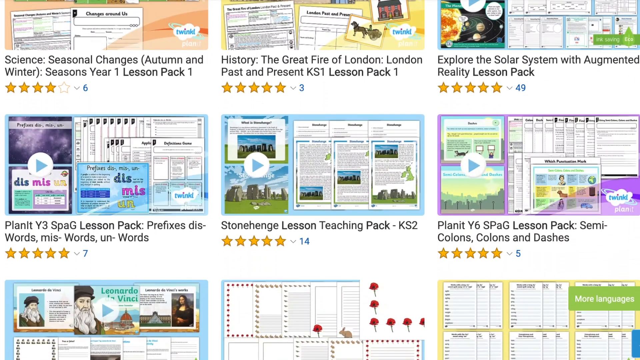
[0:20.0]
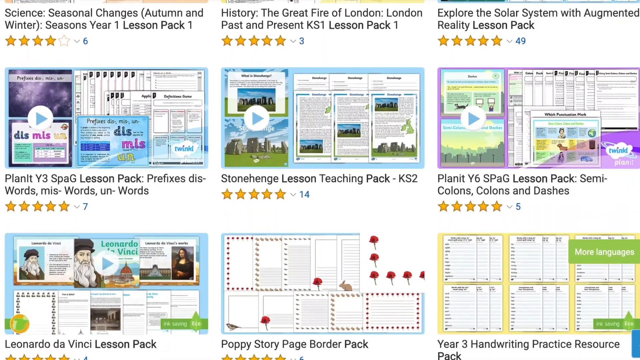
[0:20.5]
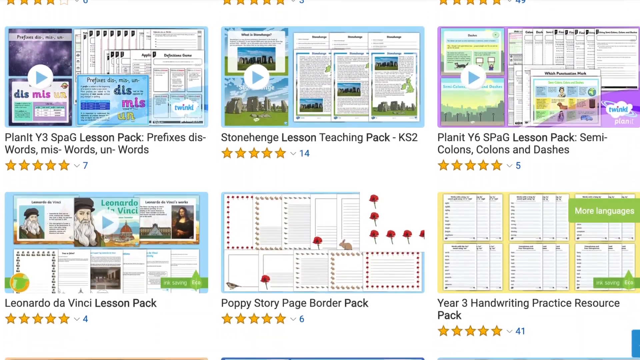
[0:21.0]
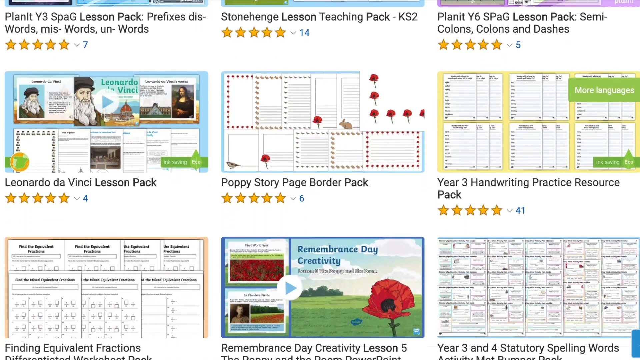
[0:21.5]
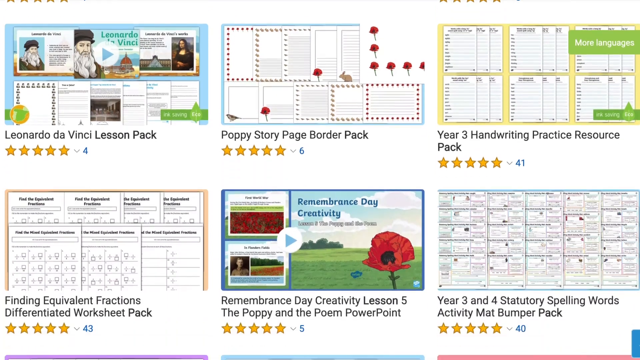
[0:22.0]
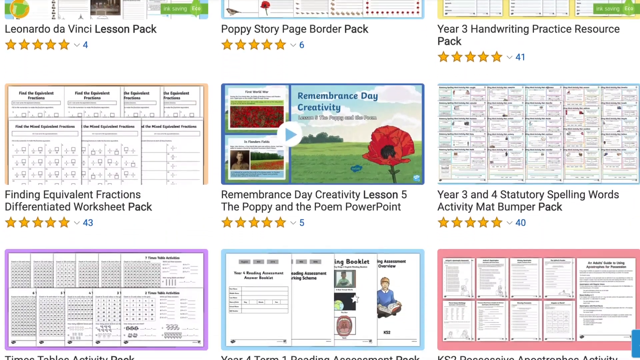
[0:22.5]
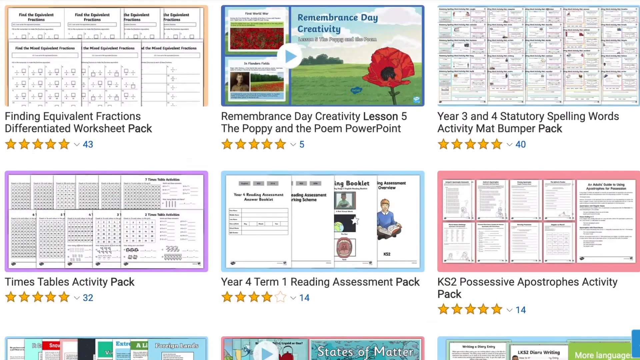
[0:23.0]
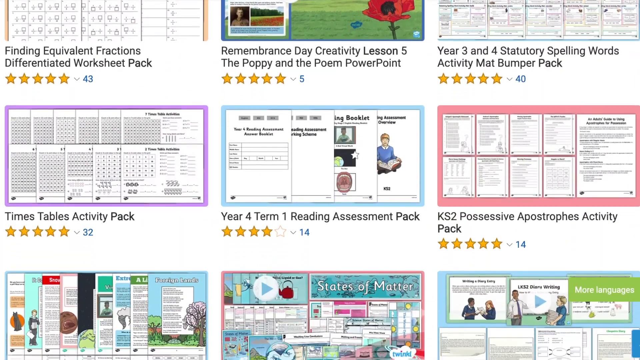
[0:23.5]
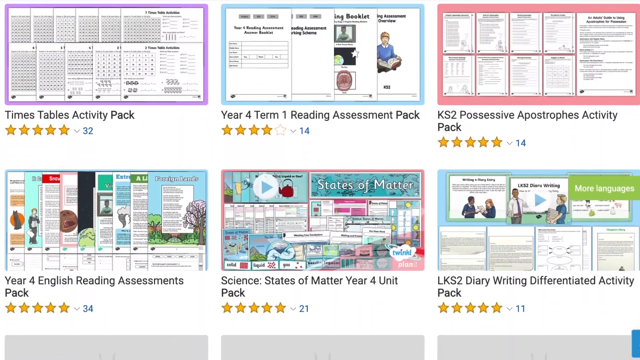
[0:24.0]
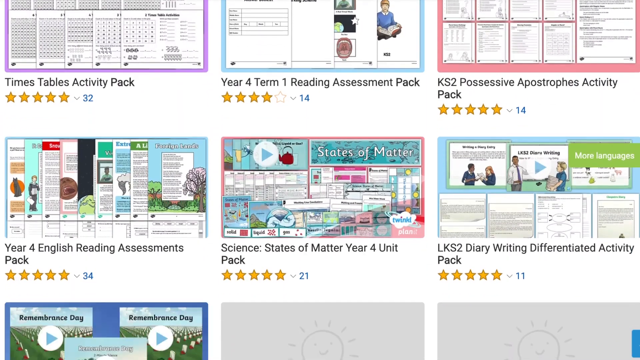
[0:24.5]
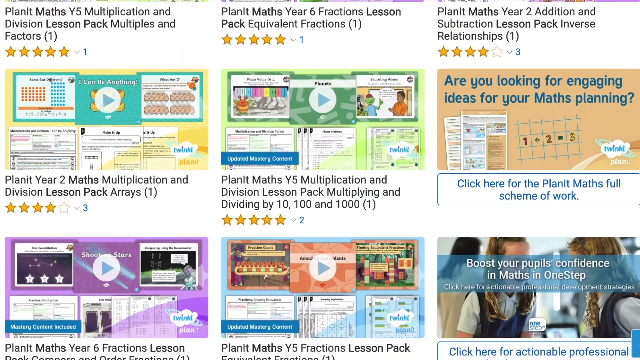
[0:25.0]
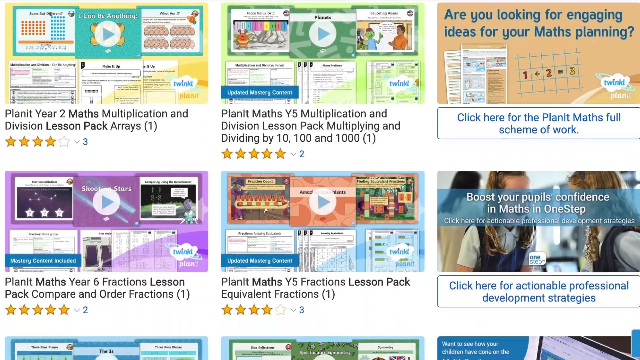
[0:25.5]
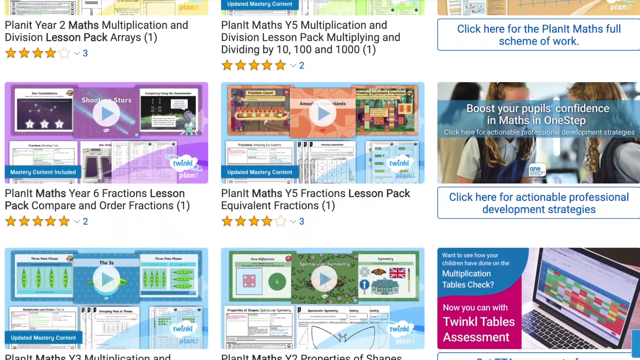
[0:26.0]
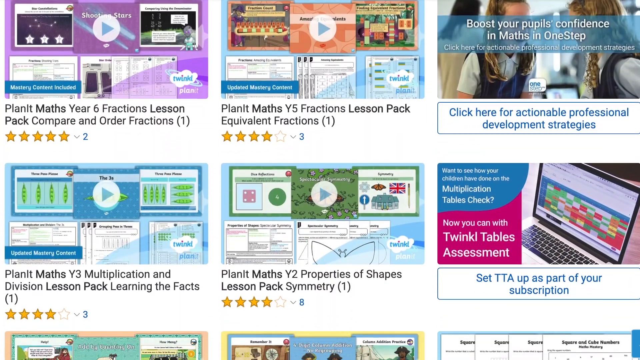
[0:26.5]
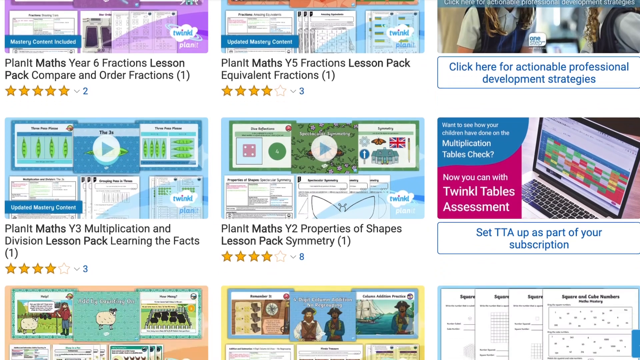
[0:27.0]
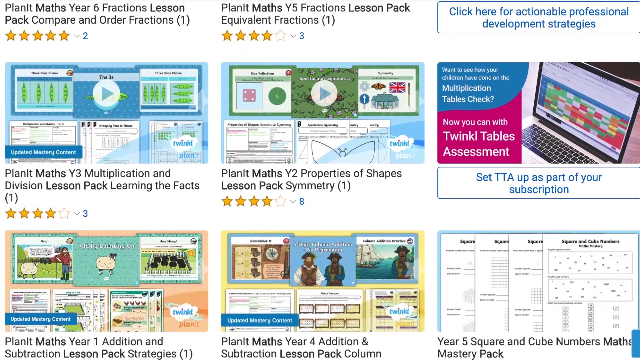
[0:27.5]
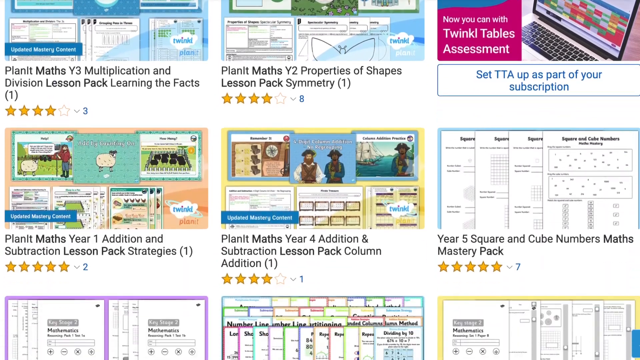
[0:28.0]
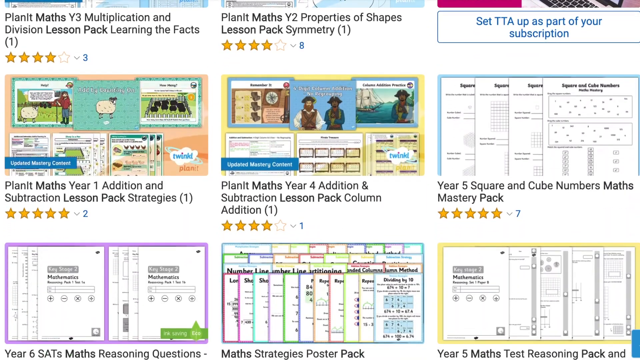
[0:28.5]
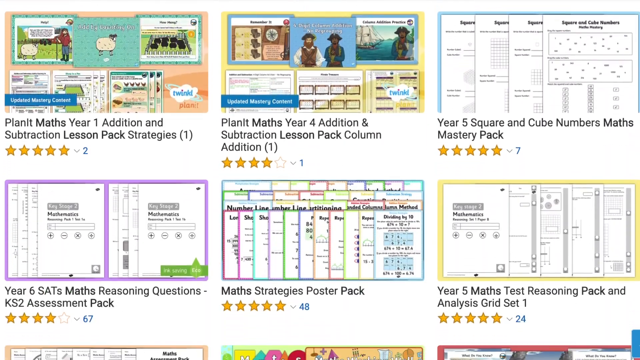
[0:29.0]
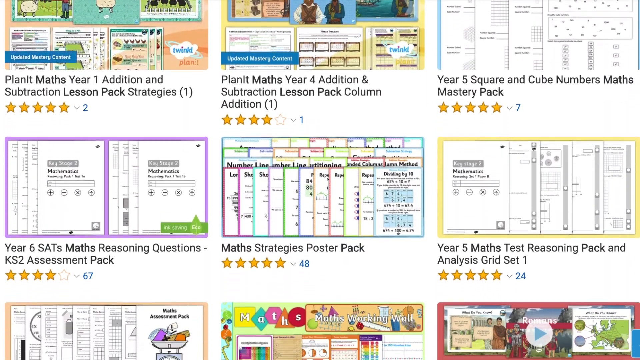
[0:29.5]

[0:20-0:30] The page lists what to expect, with items such as planets, maths, Y2 properties of shape, Y3 multiplication, functions, year 6 stats, maths reasoning questions, and year 5 maths reasoning. An advert at the side says "set TTA up as part of your subscription" and another reads "click here for actionable professional development strategies". No person is shown, only different types of posters that are available. "Target market" is written in different colours, and there are target tools with 26, a question mark, 5, 68 and another question mark inside different circles.